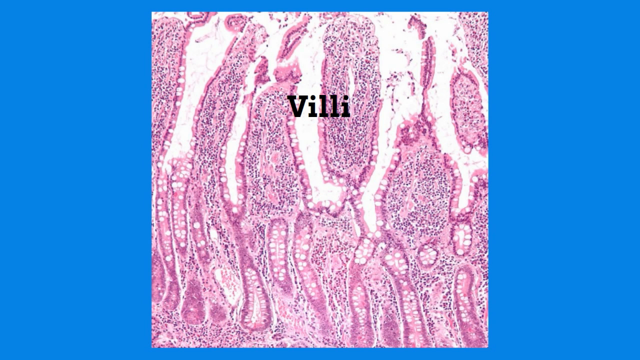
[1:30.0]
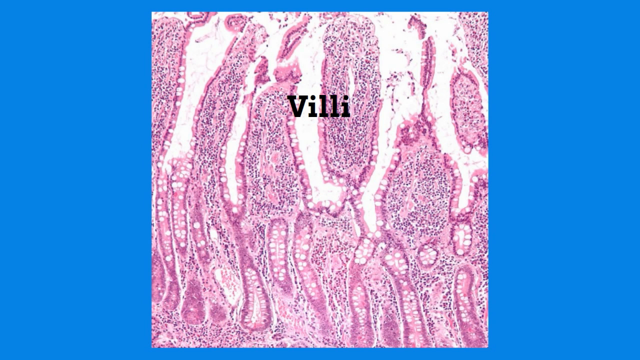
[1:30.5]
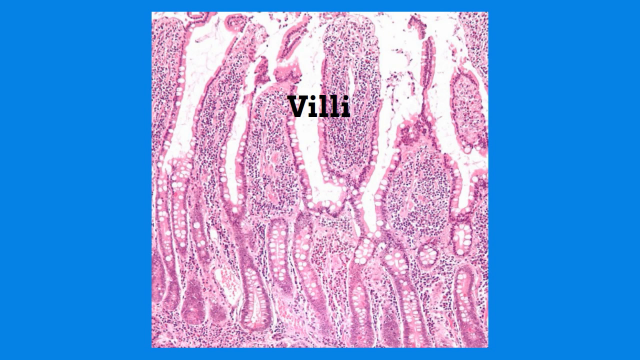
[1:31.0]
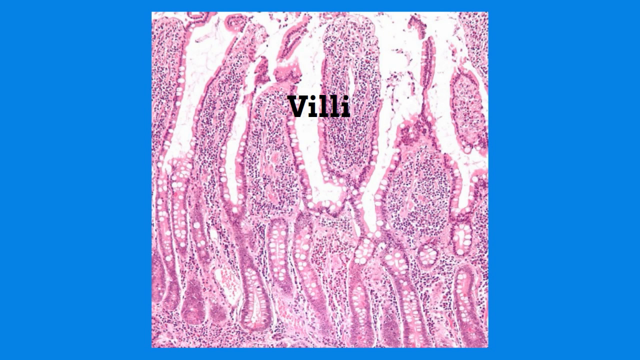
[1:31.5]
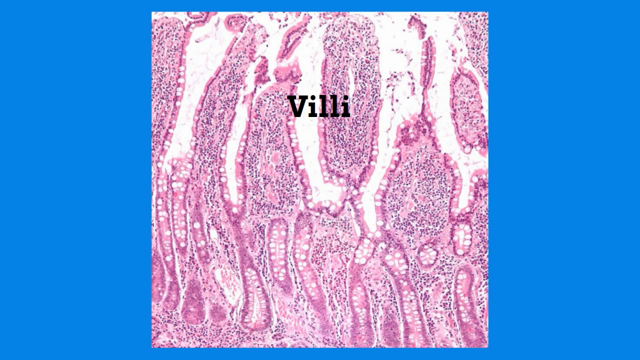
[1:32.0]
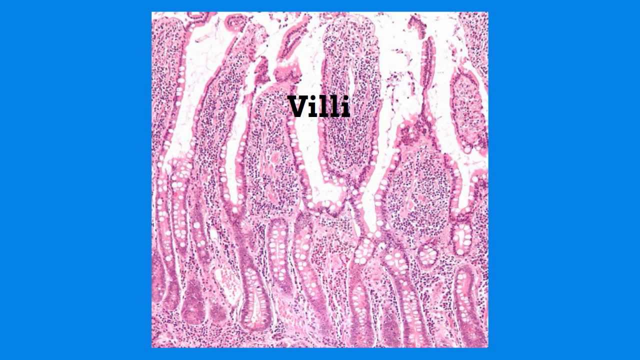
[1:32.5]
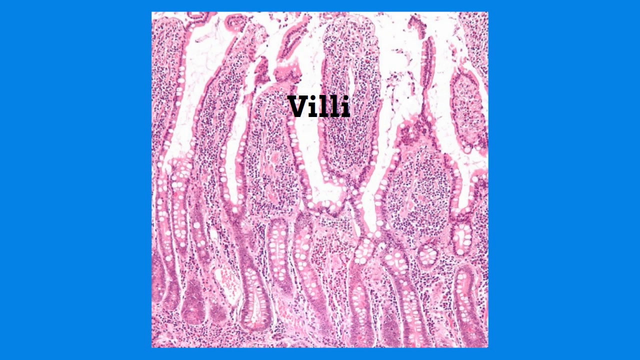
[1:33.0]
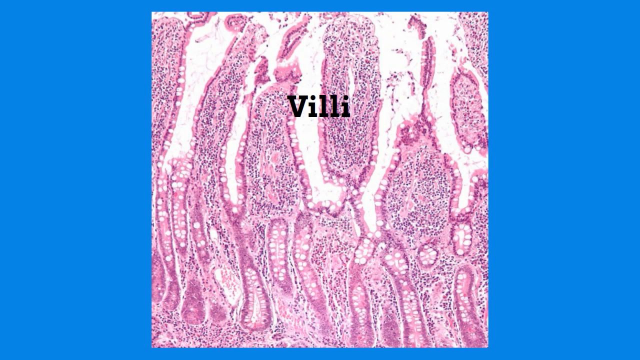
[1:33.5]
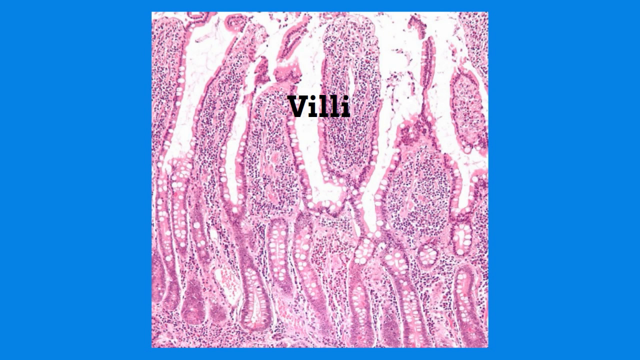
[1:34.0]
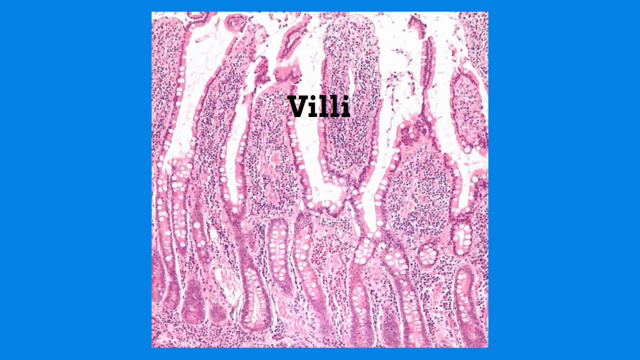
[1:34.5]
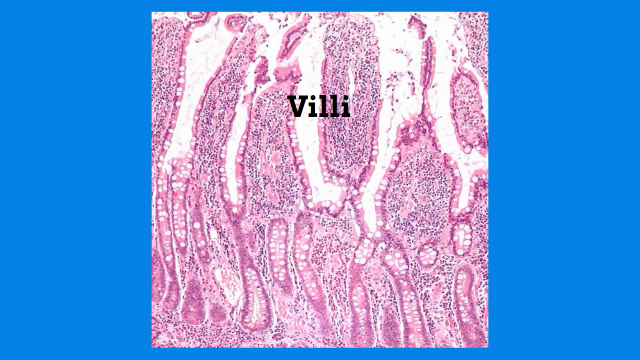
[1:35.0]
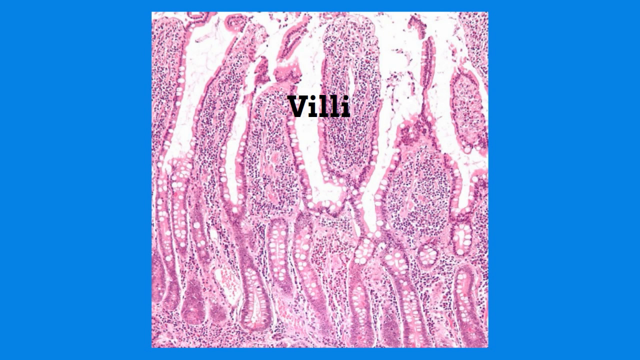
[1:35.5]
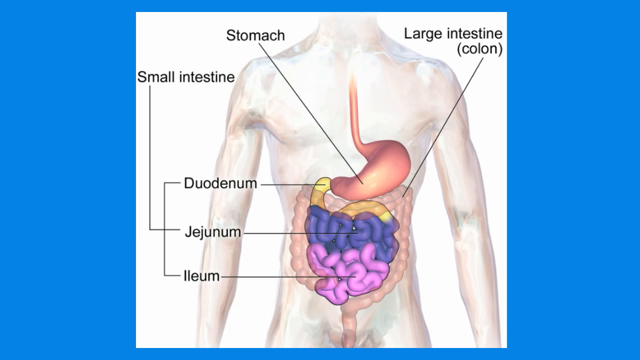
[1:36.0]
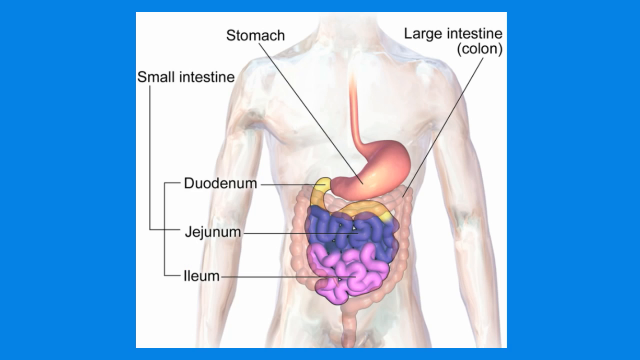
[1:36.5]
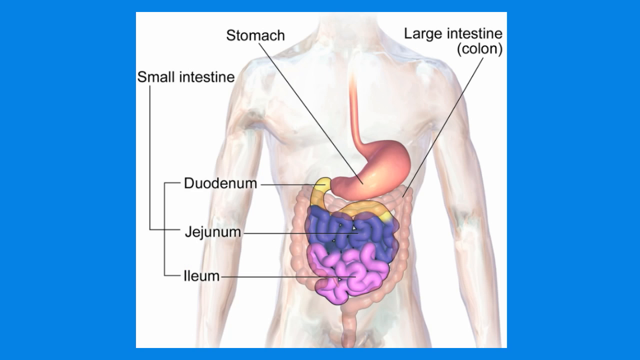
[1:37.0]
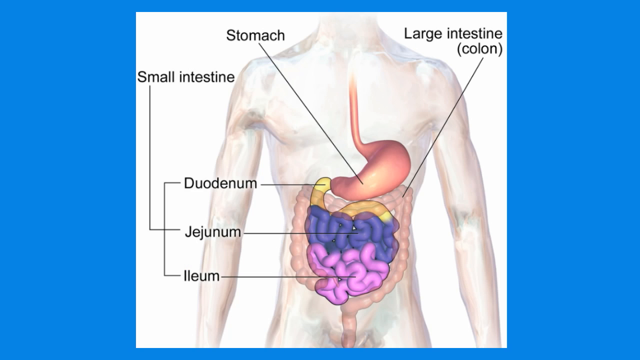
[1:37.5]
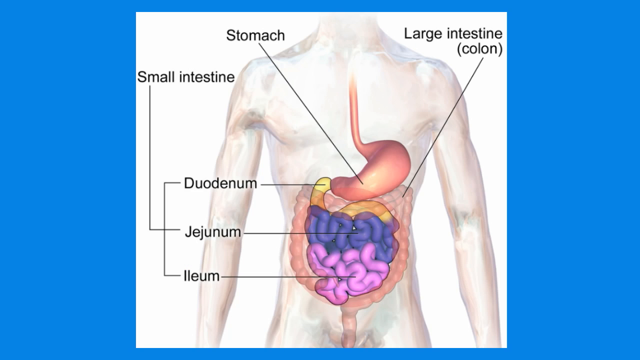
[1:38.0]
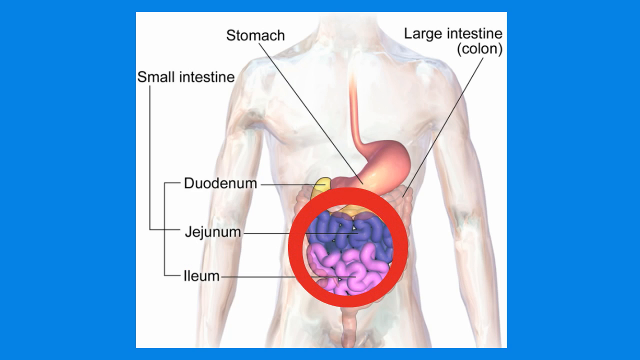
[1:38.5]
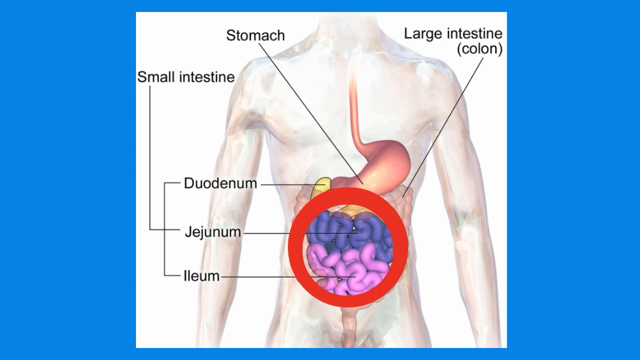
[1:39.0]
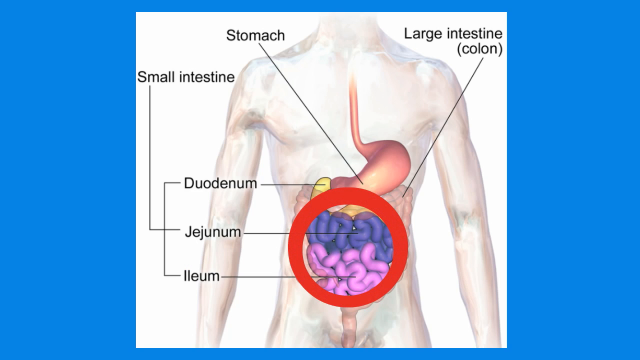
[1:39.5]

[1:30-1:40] A rather colorful image comes to a stop in the center of the screen. It lies on a blue background and has black text in the center of the image, in its upper part. Then another image appears, showing a semi-transparent human body with internal organs of different colors. Several black words within the image are connected to specific points of the organs by rather thin black lines.